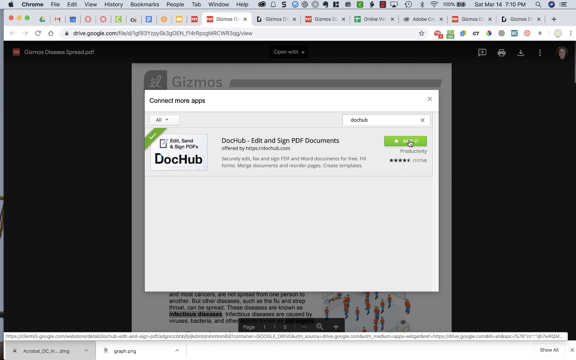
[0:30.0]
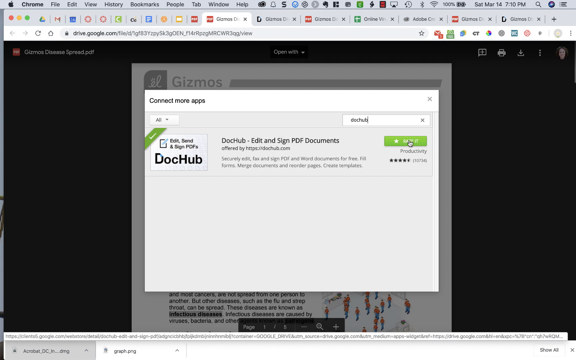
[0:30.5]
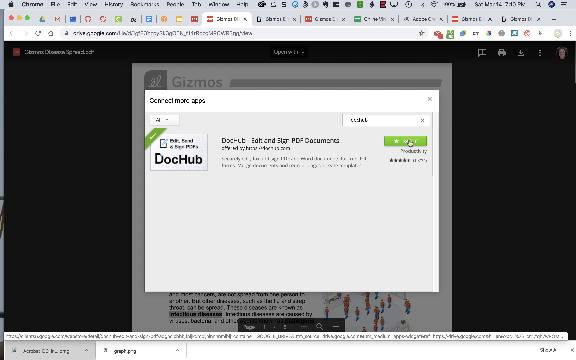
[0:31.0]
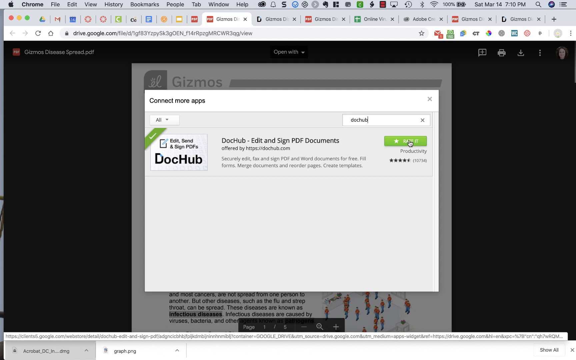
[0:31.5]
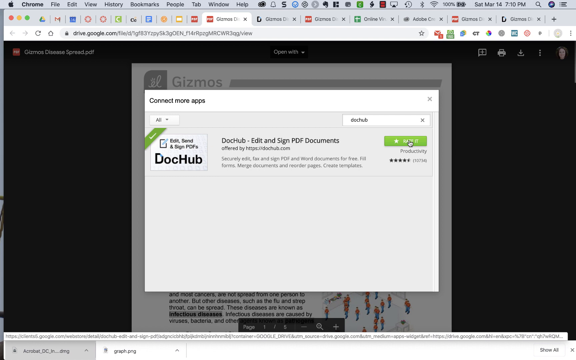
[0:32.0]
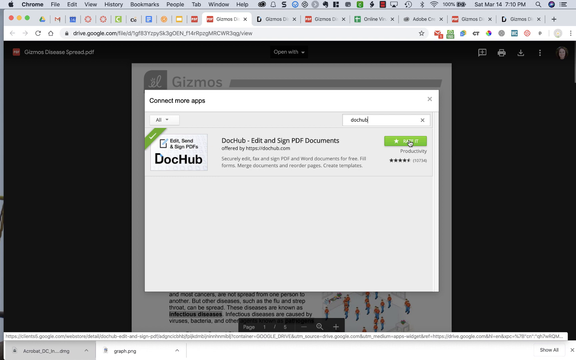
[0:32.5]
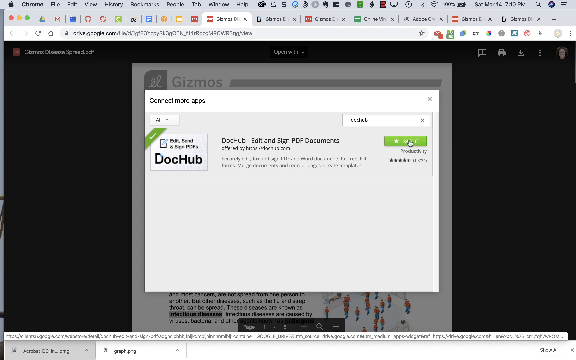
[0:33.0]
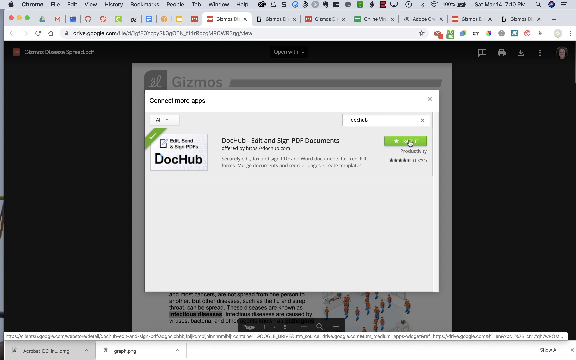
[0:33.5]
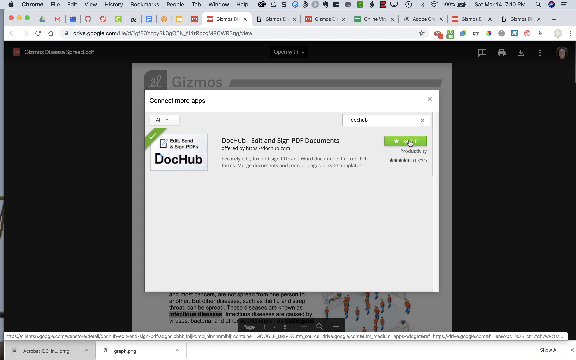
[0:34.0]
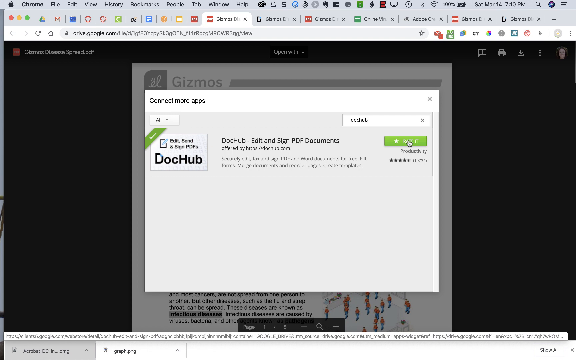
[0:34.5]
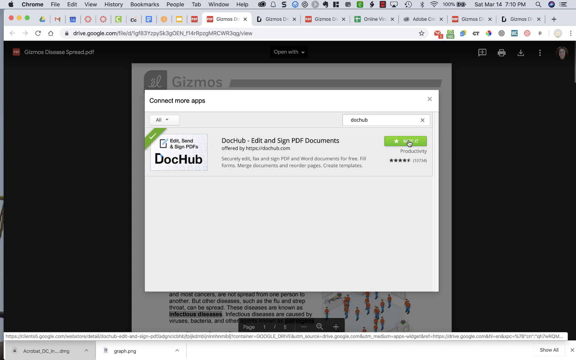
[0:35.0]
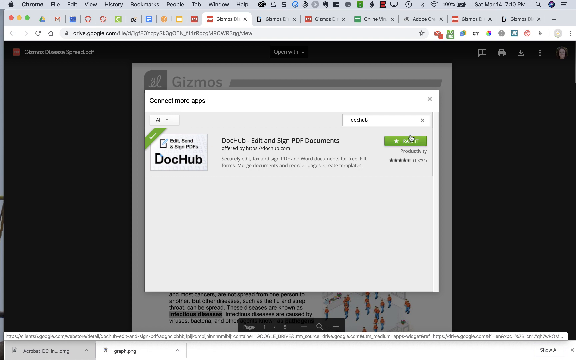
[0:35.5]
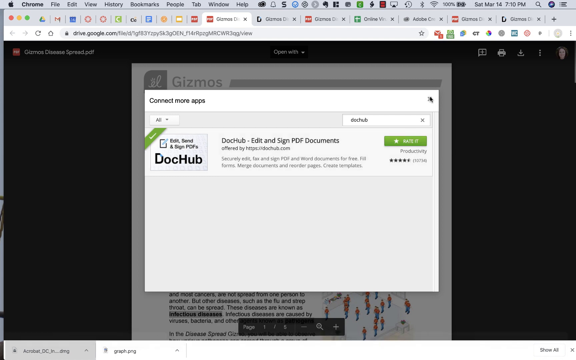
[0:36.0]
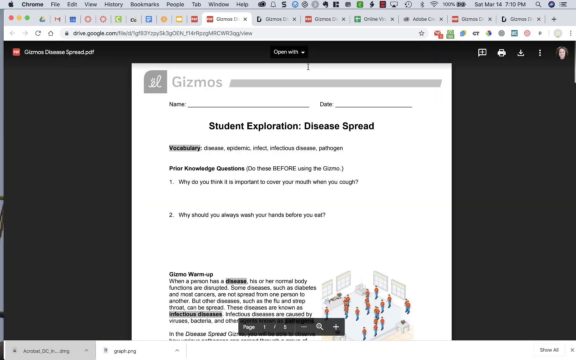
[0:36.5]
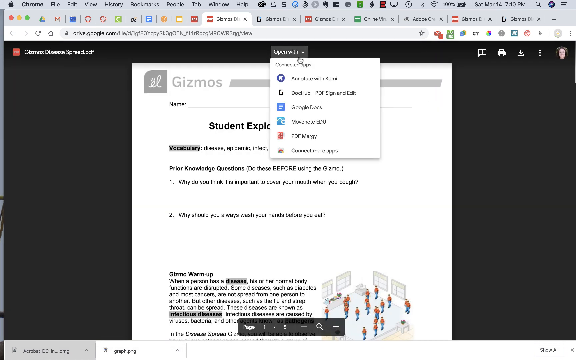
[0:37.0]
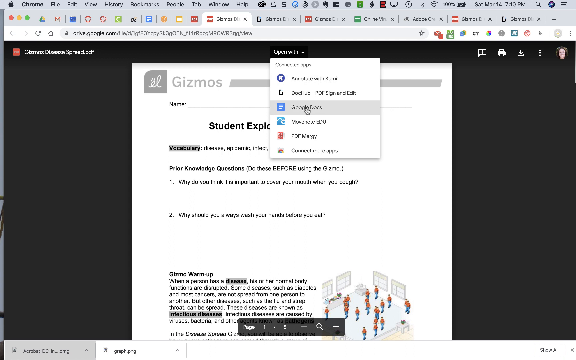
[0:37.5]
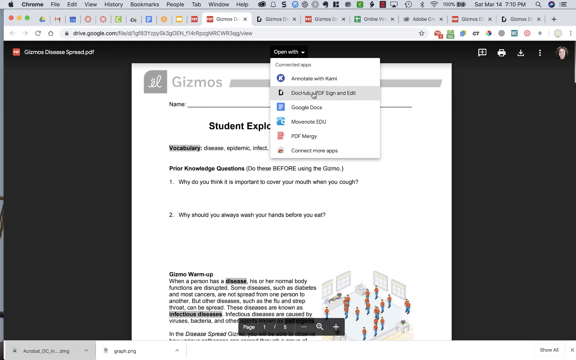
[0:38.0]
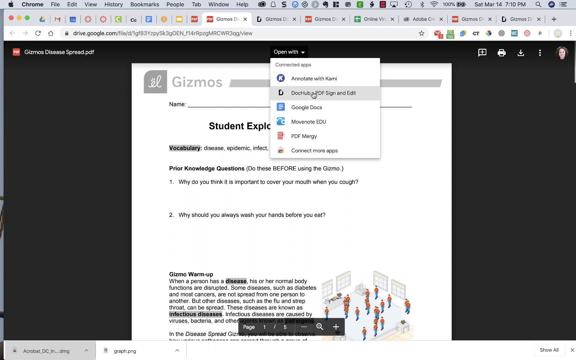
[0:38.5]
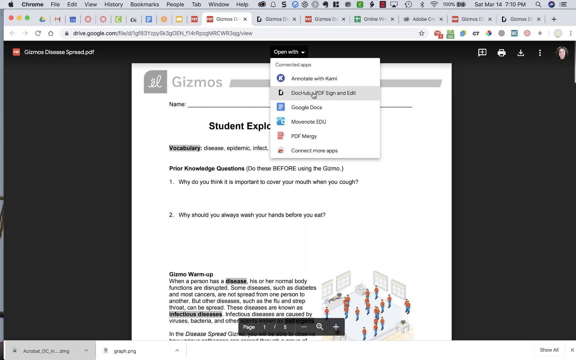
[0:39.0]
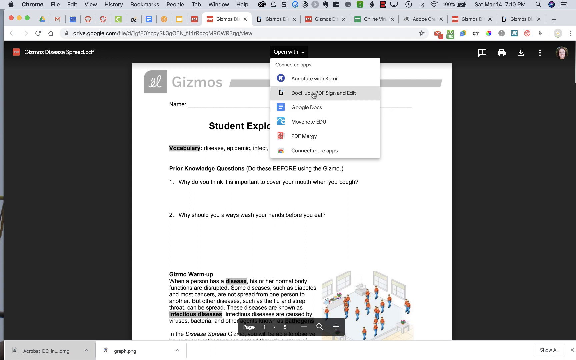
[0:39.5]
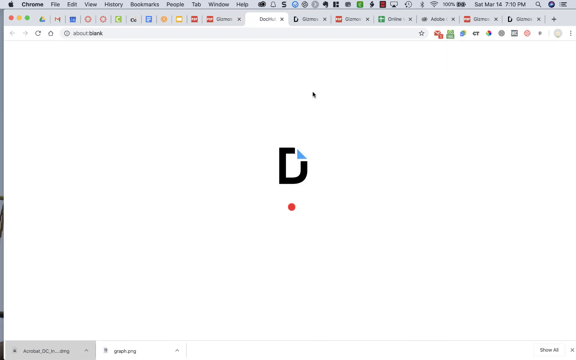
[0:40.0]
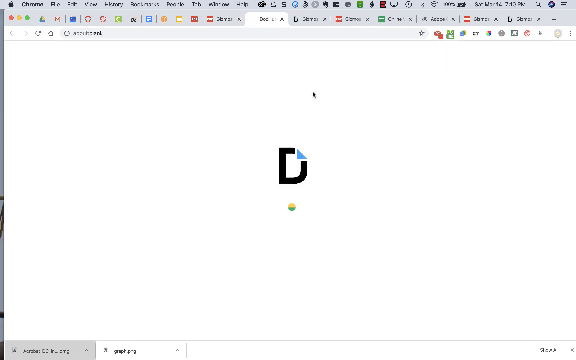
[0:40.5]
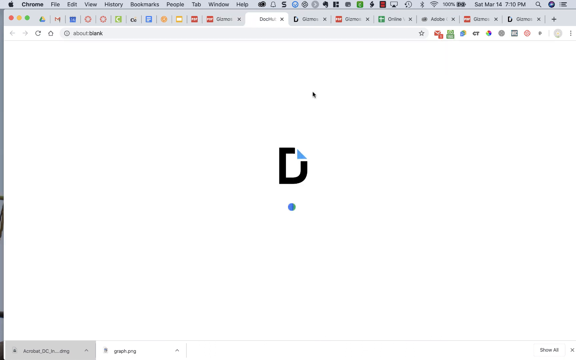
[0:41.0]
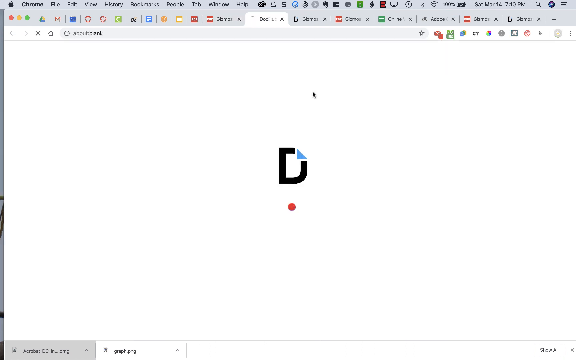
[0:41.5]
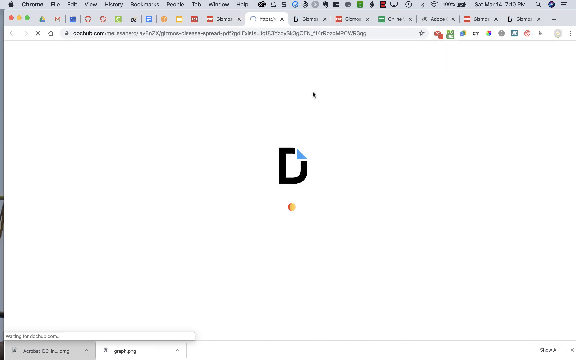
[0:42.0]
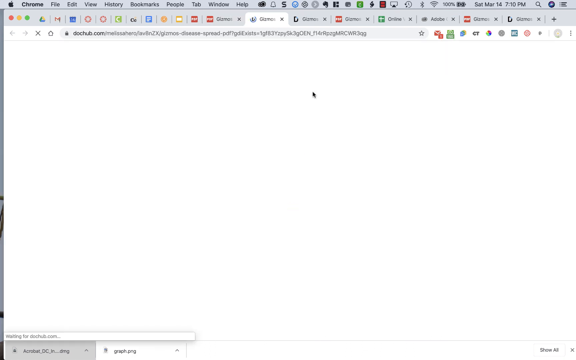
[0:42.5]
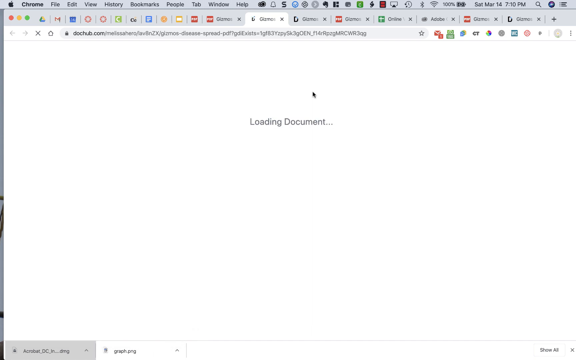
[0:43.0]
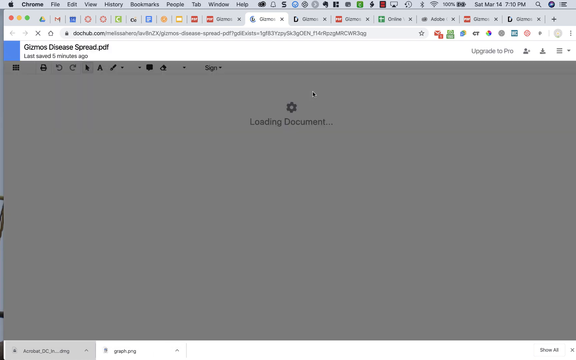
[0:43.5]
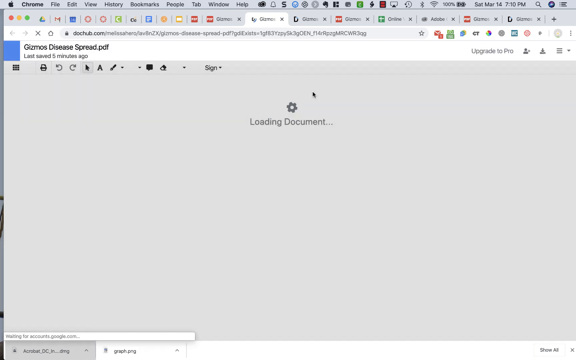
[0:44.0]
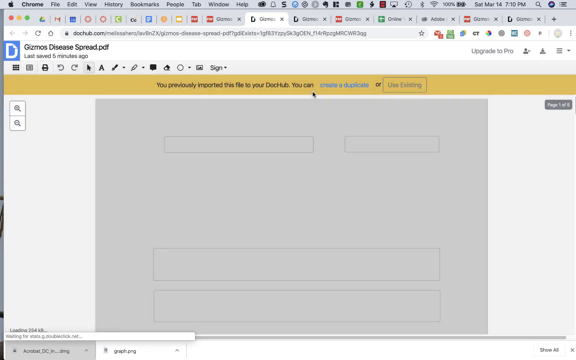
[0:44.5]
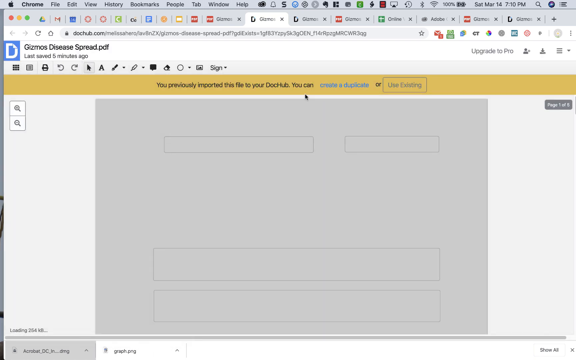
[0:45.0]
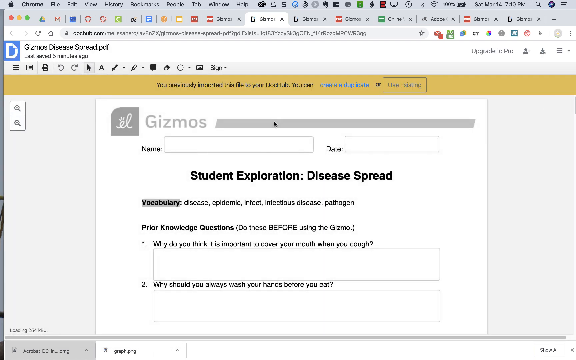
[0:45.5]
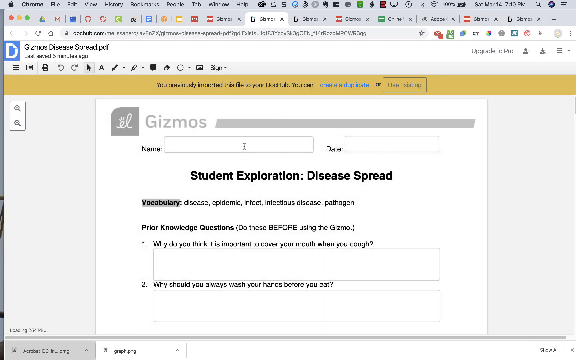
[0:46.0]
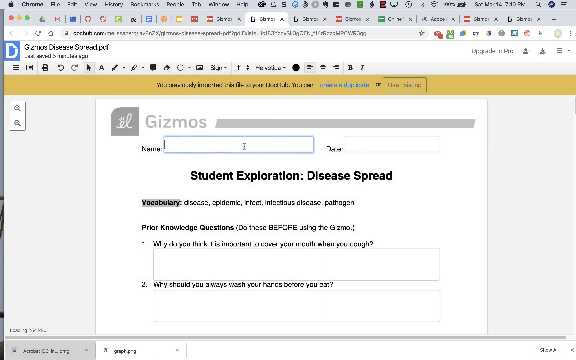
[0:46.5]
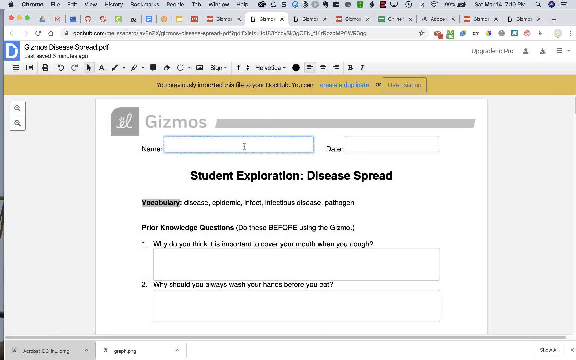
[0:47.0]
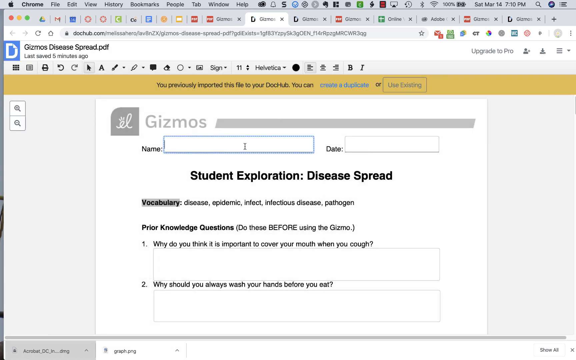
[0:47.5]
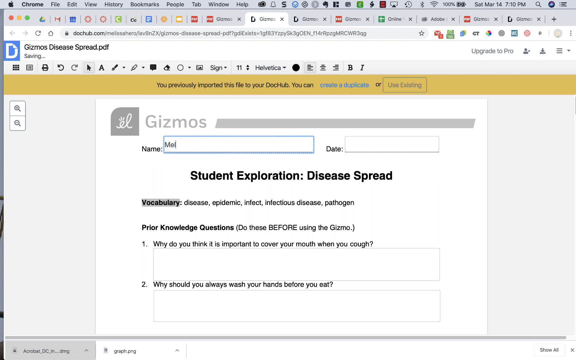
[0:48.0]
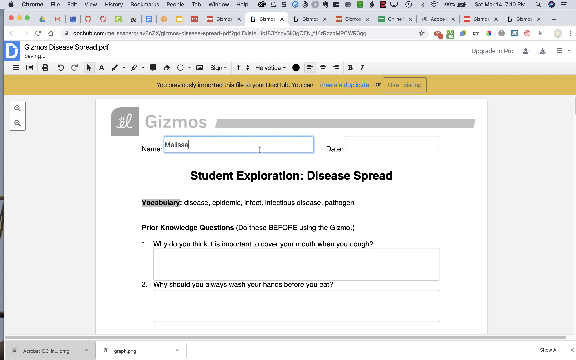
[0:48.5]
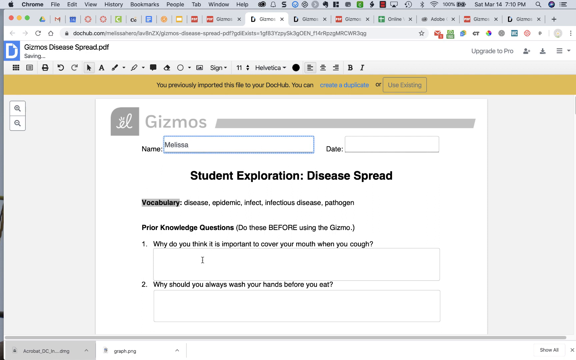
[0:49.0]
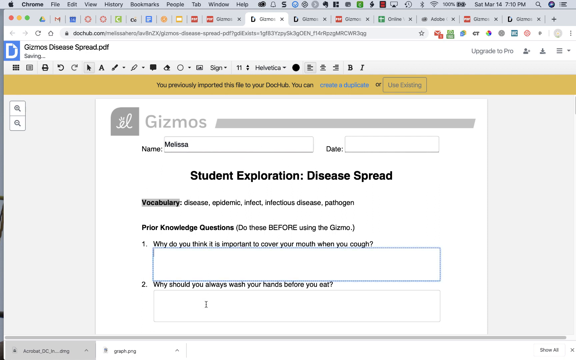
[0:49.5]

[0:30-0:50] In Google Drive, a "Connect More Apps" window is open showing "DocHub. Edit and sign PDF documents," with the mouse hovering over a green button that has a white star. The user closes the window, then opens "open with," which shows connected apps, hovers over "doc hub pdf sign," and clicks it. A loading page for DocHub appears, and then the PDF document gizmos disease spread loads. A small box next to "name" is highlighted, and the user types in "melissa," then clicks into box one and box two. Text on the page reads "student exploration disease spread," with vocabulary "disease, epidemic, infect, infectious disease, pathogen," and "prior knowledge questions. Do these before using the gizmo. One, why do you think it's important to cover your mouth when you cough? And two, why should you always wash your hands before you eat?"